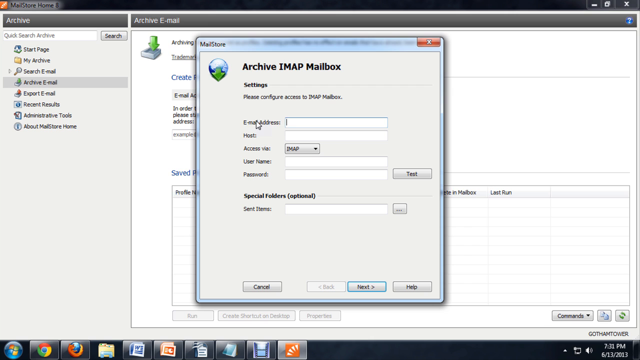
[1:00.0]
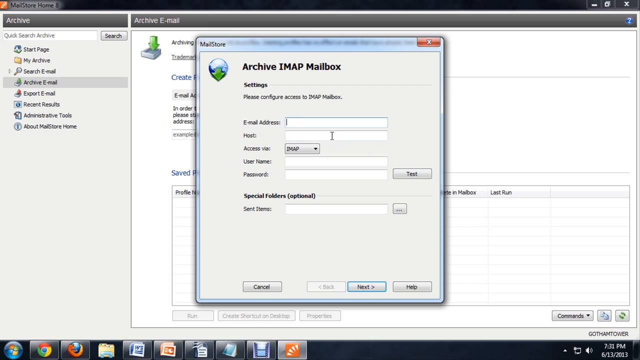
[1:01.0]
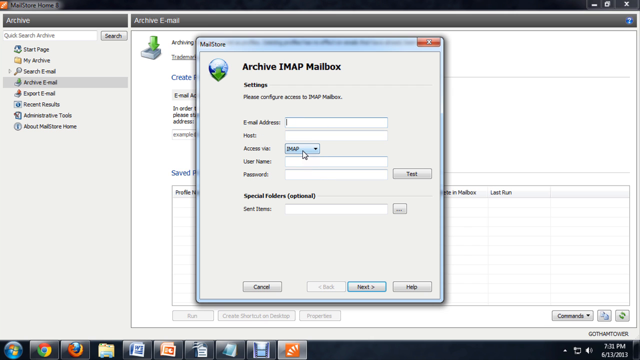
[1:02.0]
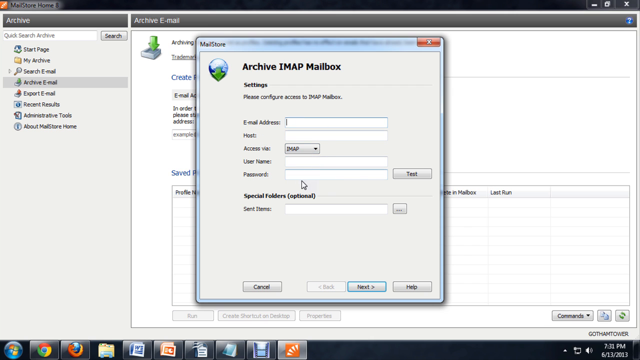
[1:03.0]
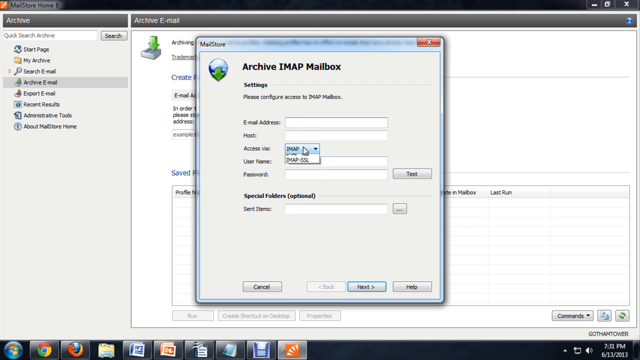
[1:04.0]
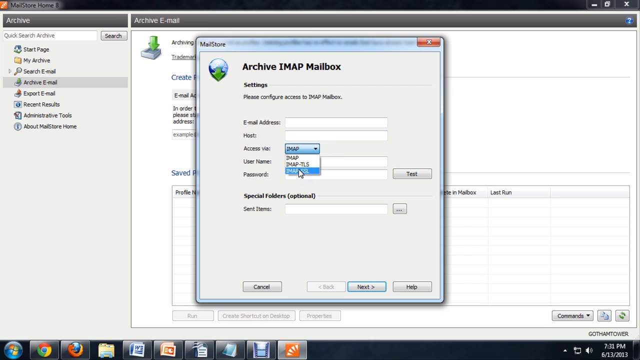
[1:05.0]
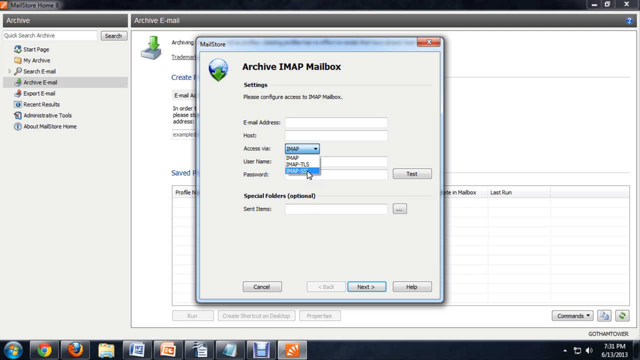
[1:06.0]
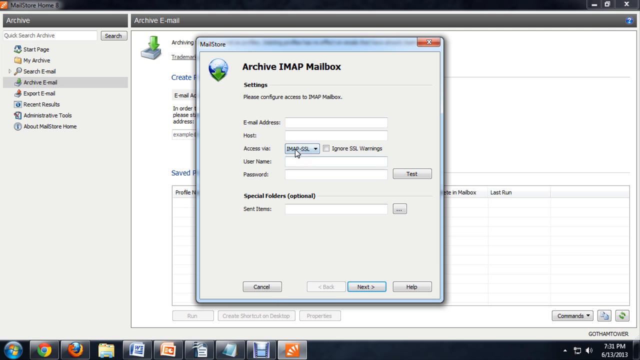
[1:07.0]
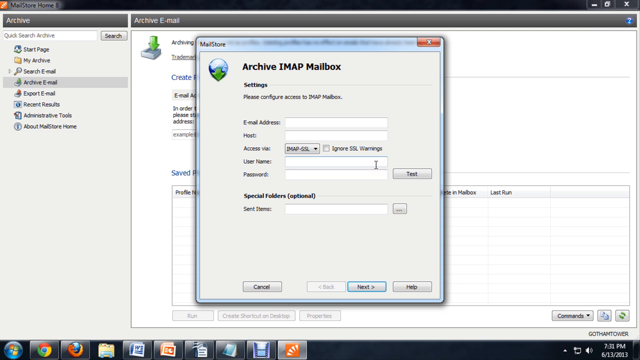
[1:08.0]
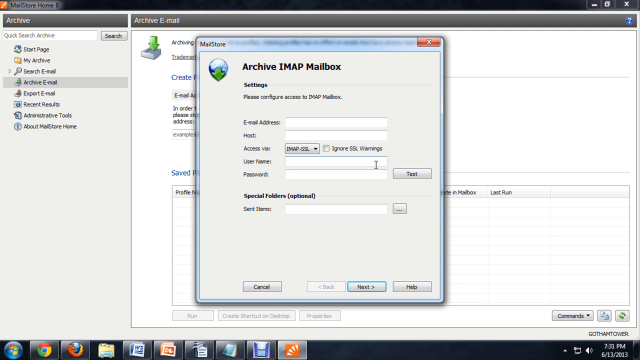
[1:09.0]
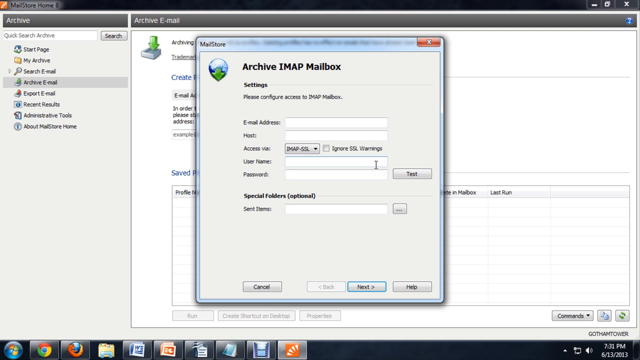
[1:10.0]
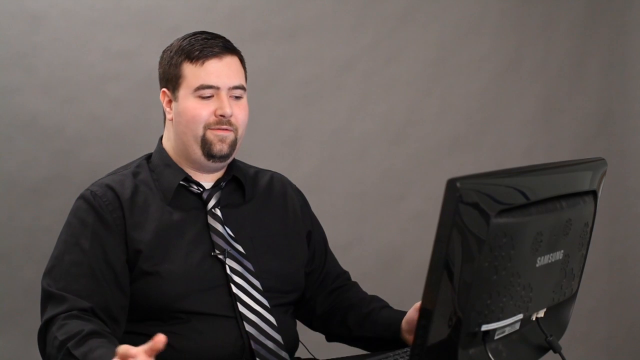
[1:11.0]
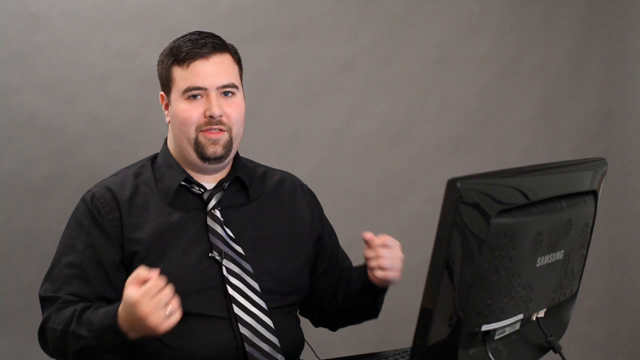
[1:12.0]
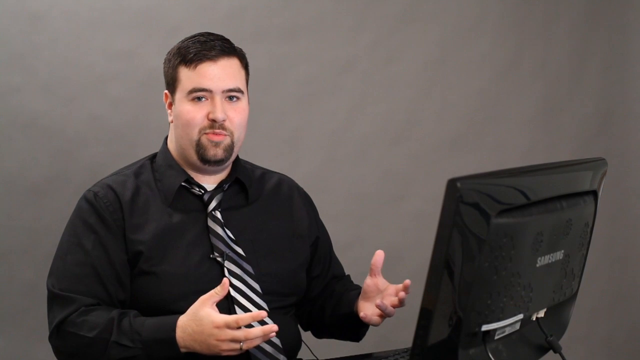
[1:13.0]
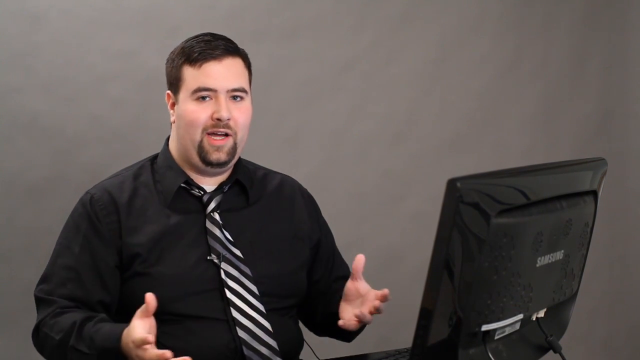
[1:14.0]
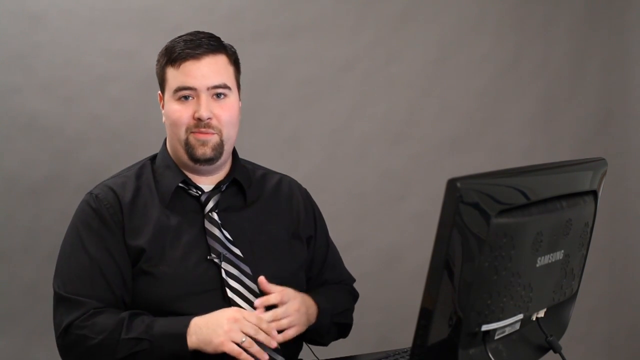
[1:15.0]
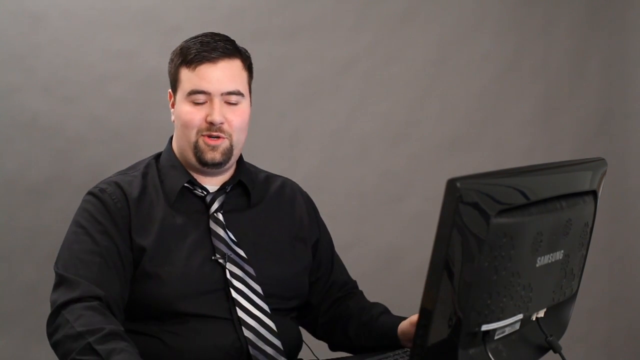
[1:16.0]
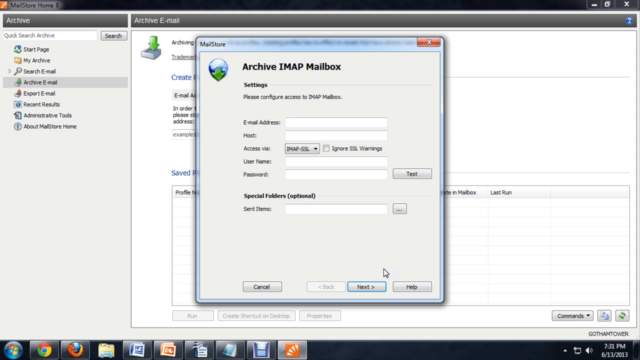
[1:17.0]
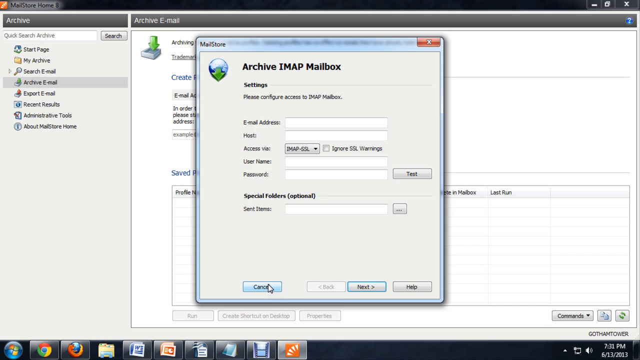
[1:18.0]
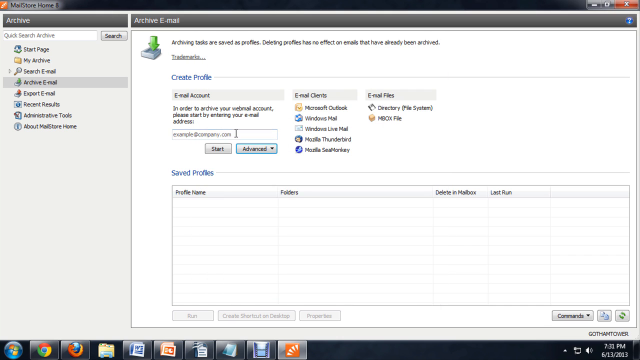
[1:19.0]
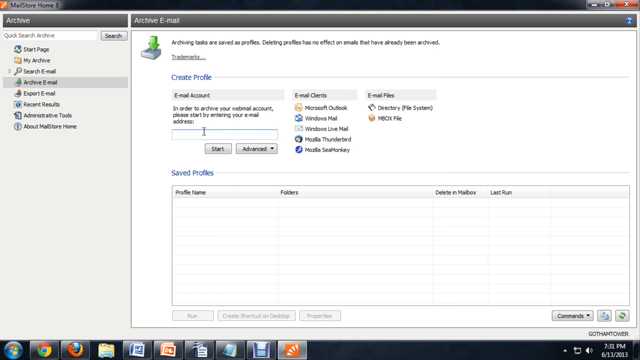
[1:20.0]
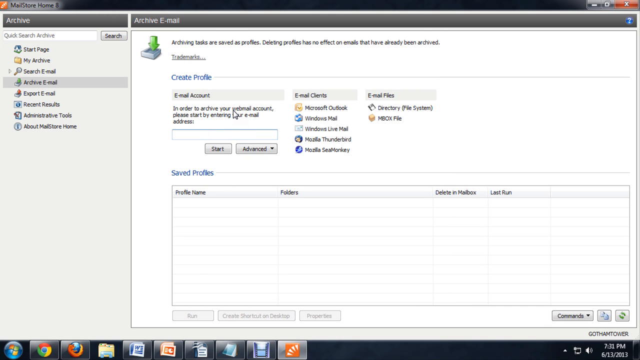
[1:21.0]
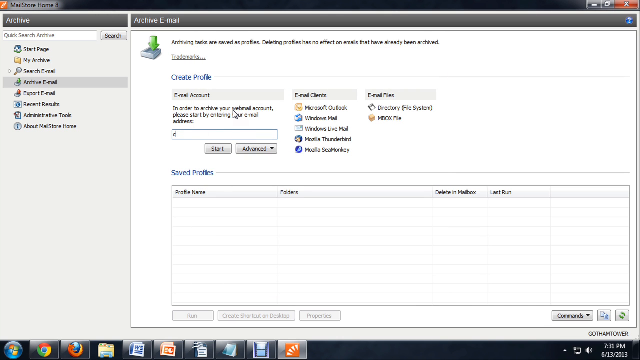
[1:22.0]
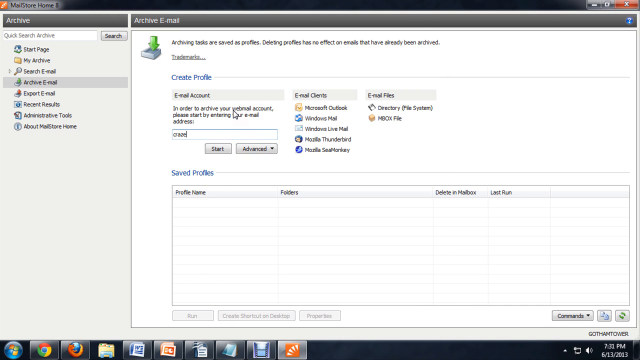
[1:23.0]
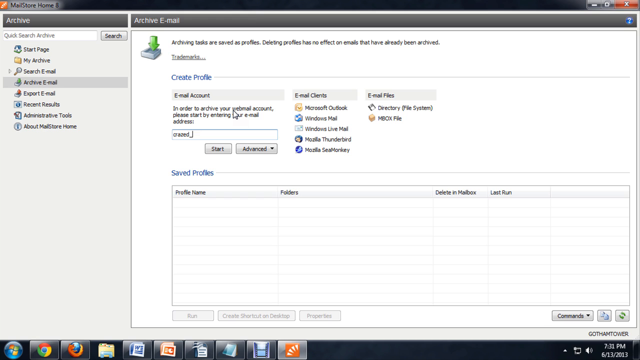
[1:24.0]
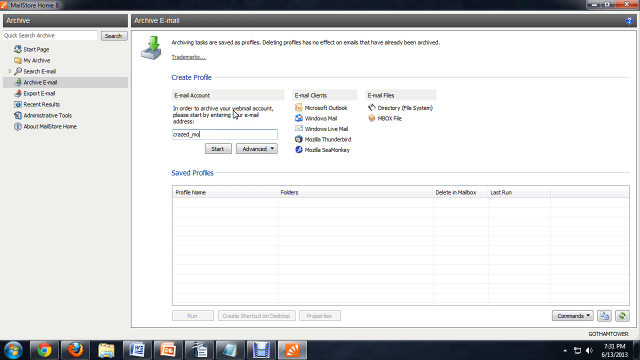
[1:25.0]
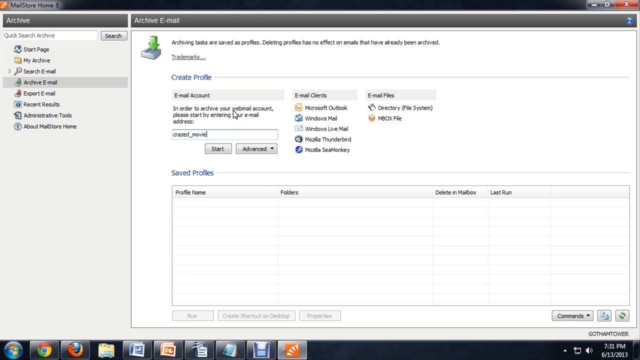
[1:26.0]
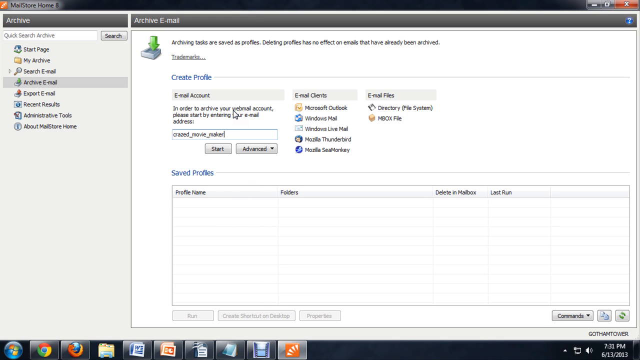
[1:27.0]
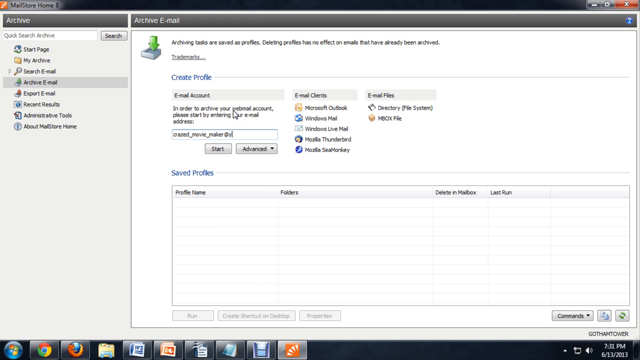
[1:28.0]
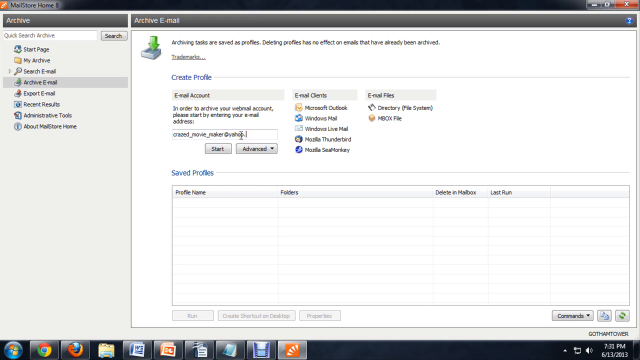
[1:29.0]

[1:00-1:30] The Archive IMAP mailbox in the Mail Store app shows settings fields for an email address, a hostname, a username and a password, still empty. A field labelled "access via" has IMAP currently chosen; he opens its drop-down box, which offers IMAP TLS and IMAP SSL, and he chooses IMAP SSL. The video then returns to him speaking, still in front of what looks like an all-in-one computer, apparently explaining what is going on. Back on the Archive IMAP box, he clicks cancel, clearing out anything typed. He then goes to the email account field and types an email account, removes it and types something different, and then goes back to the Archive IMAP mailbox.